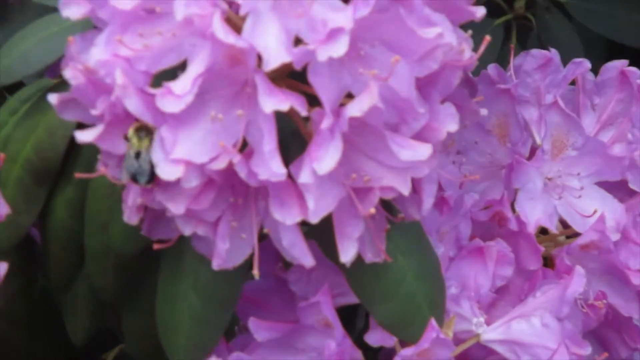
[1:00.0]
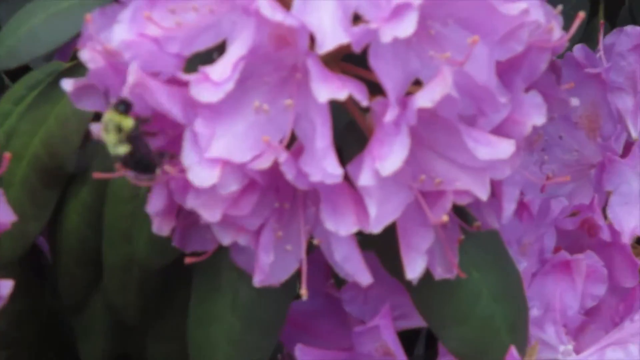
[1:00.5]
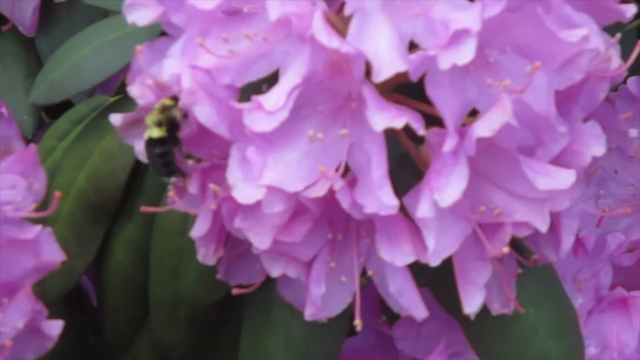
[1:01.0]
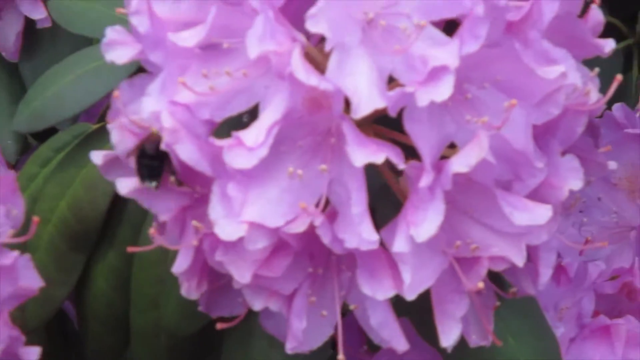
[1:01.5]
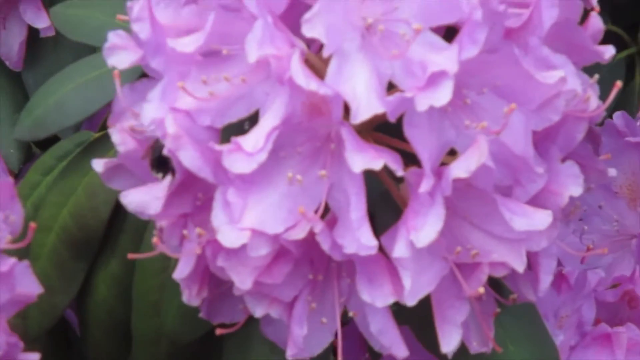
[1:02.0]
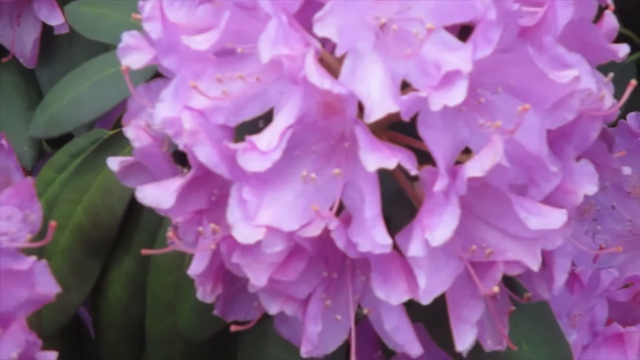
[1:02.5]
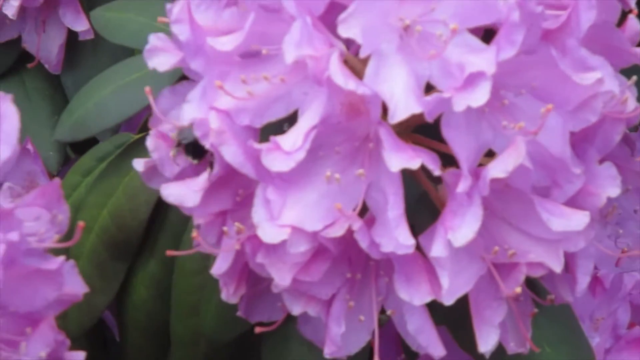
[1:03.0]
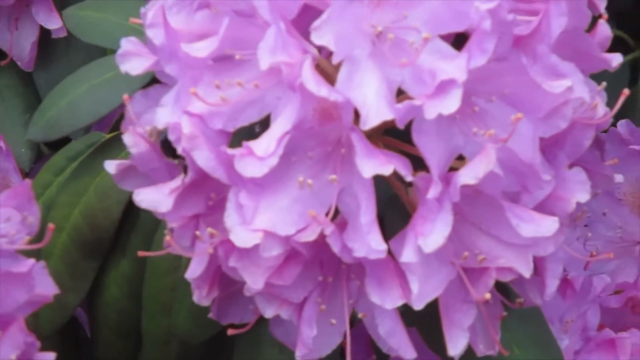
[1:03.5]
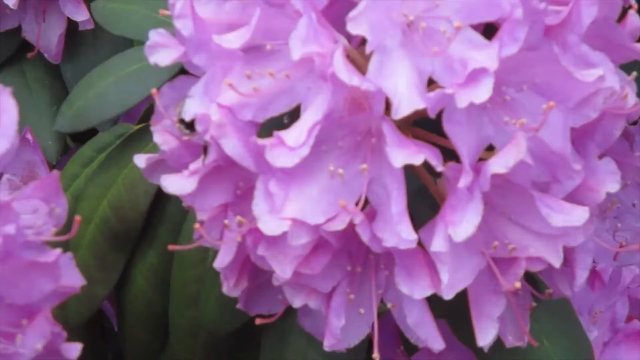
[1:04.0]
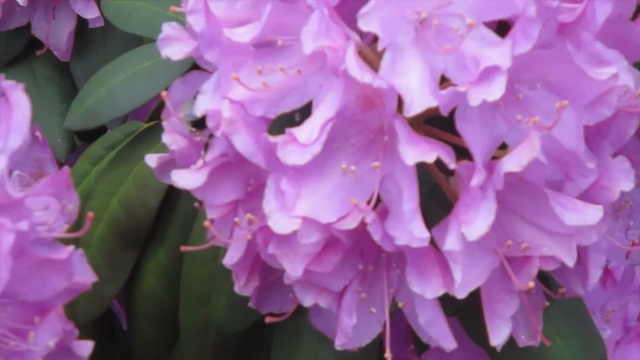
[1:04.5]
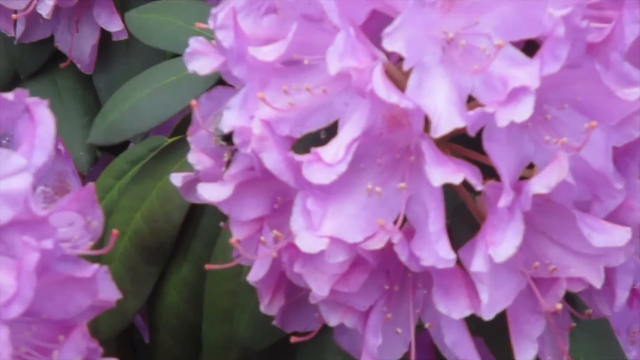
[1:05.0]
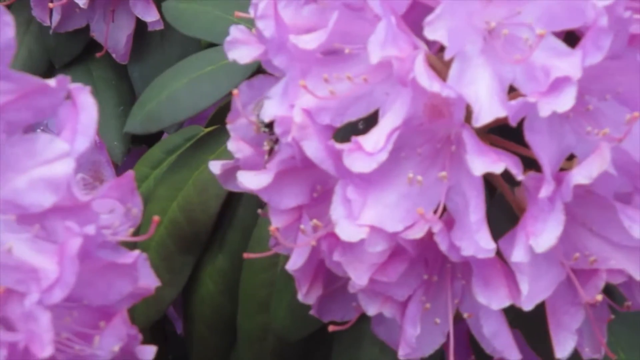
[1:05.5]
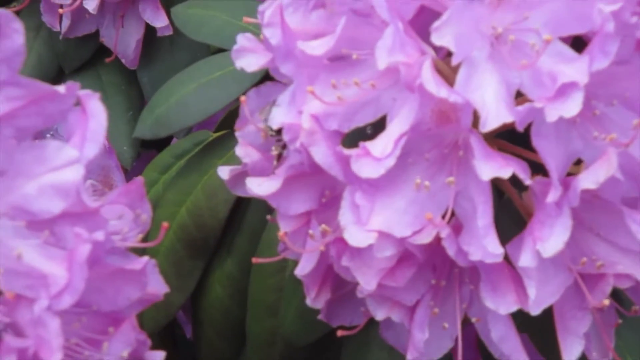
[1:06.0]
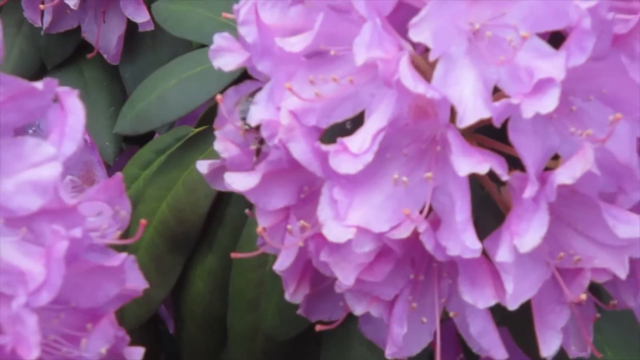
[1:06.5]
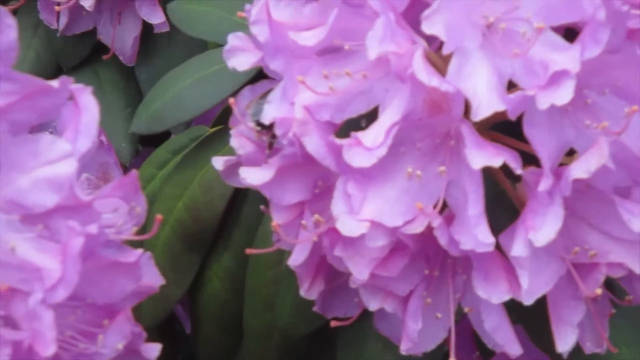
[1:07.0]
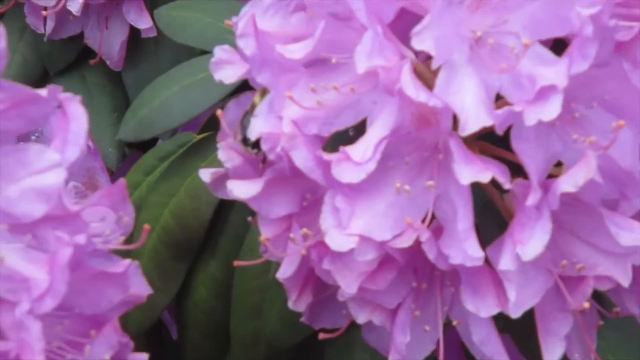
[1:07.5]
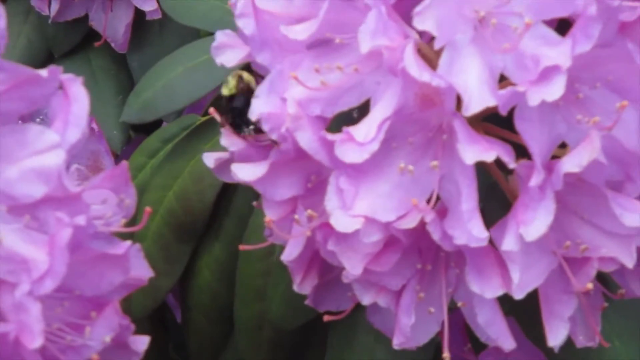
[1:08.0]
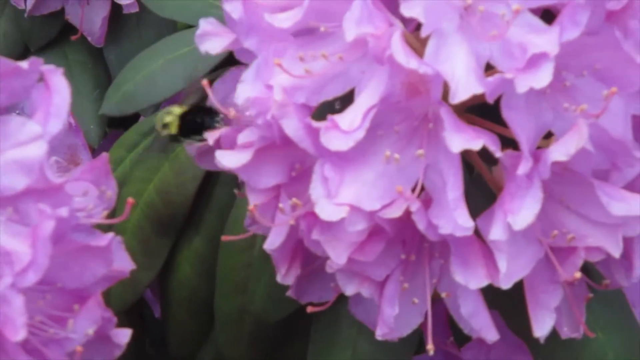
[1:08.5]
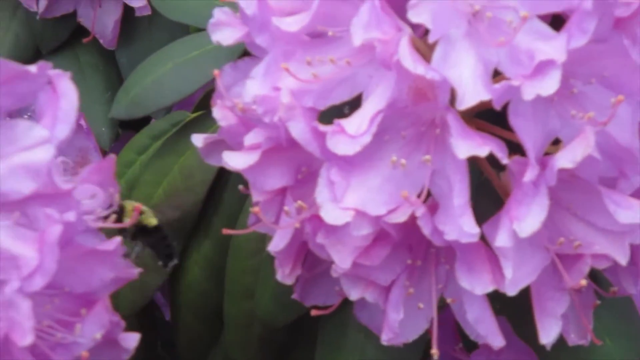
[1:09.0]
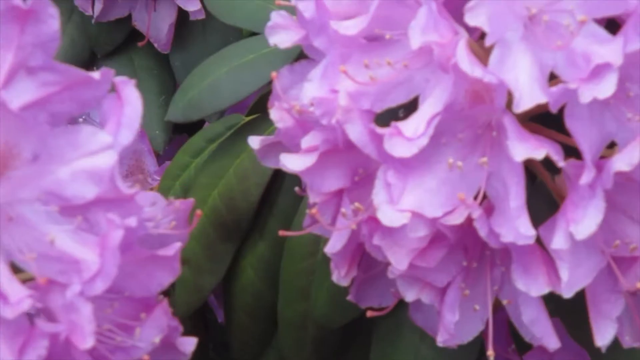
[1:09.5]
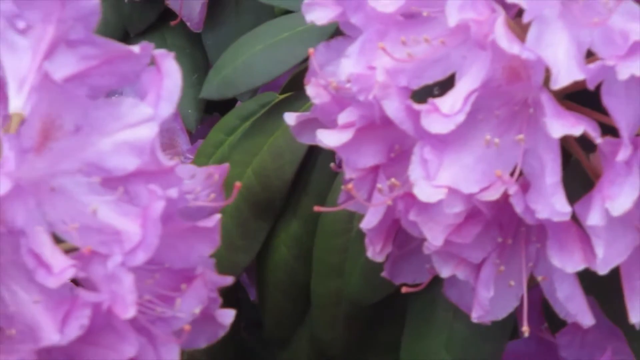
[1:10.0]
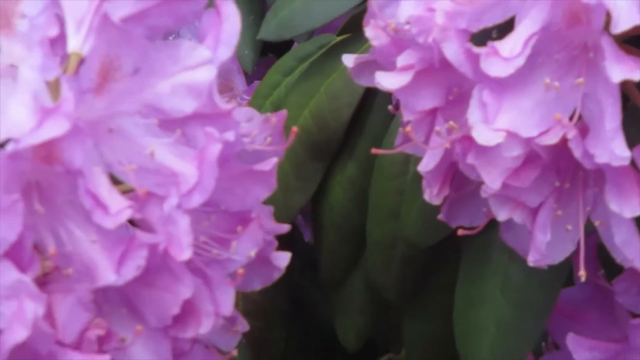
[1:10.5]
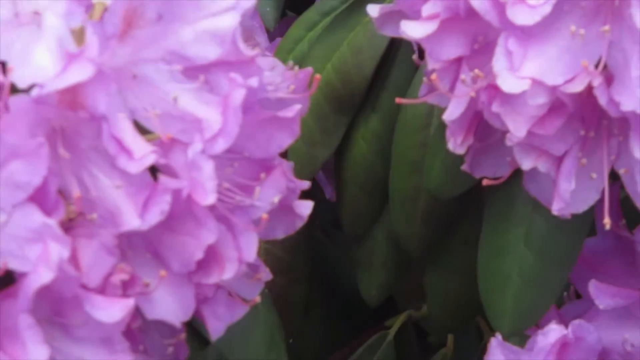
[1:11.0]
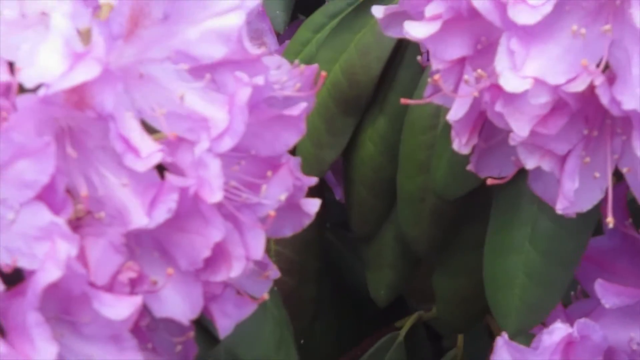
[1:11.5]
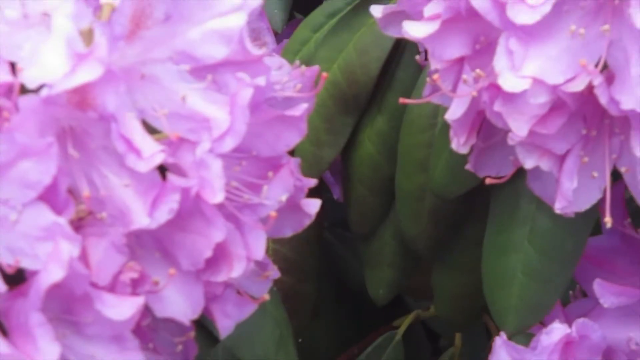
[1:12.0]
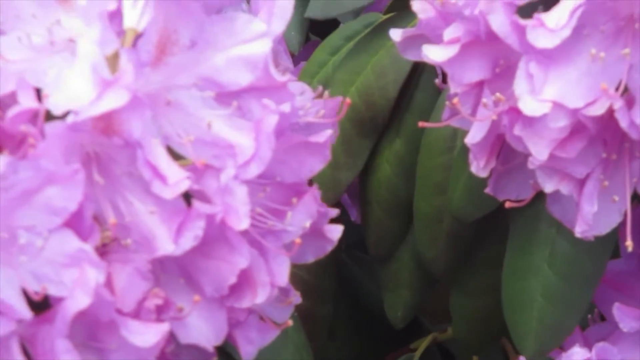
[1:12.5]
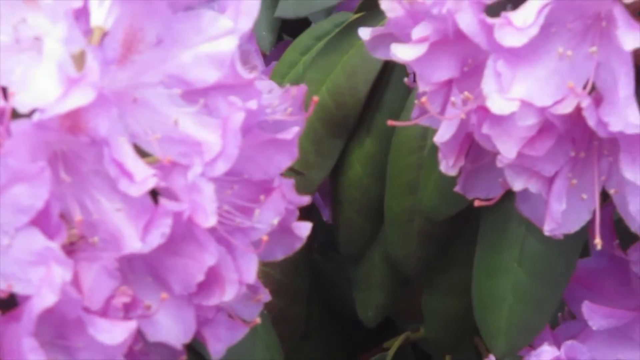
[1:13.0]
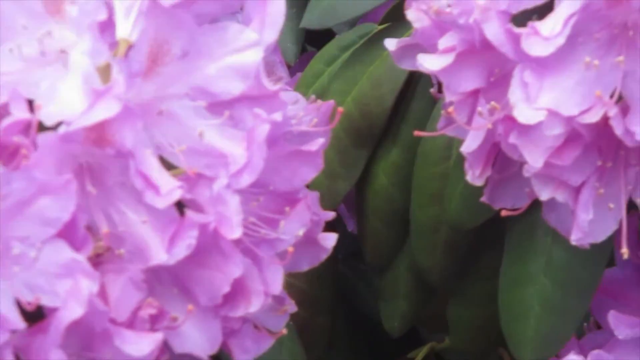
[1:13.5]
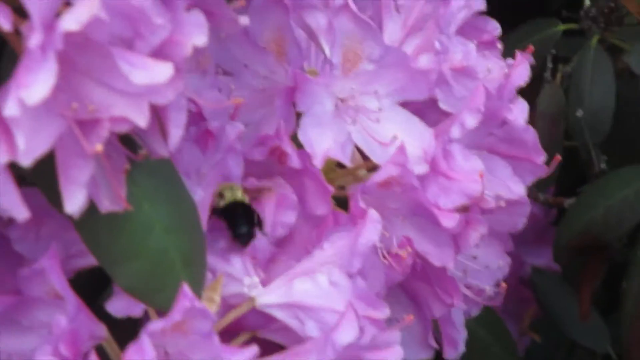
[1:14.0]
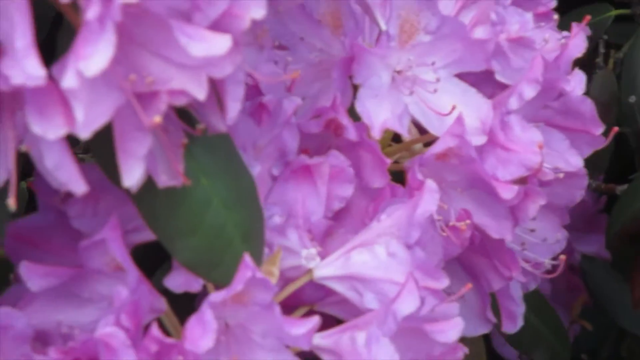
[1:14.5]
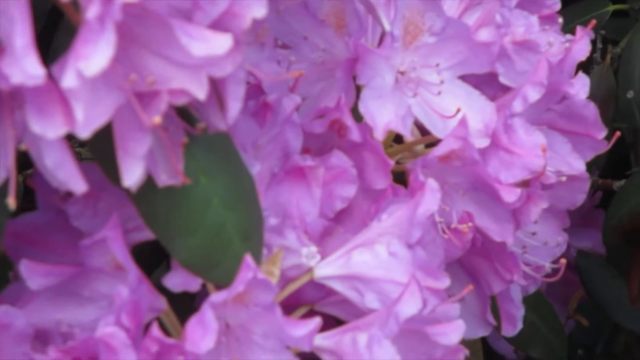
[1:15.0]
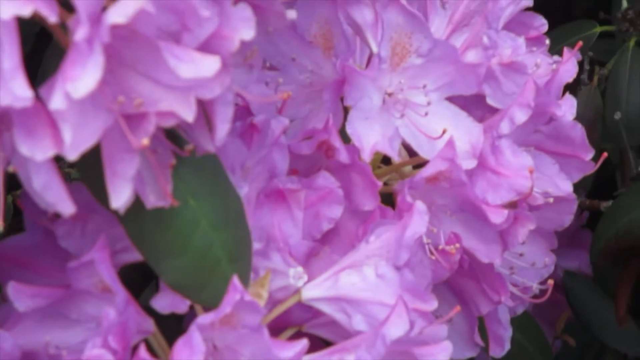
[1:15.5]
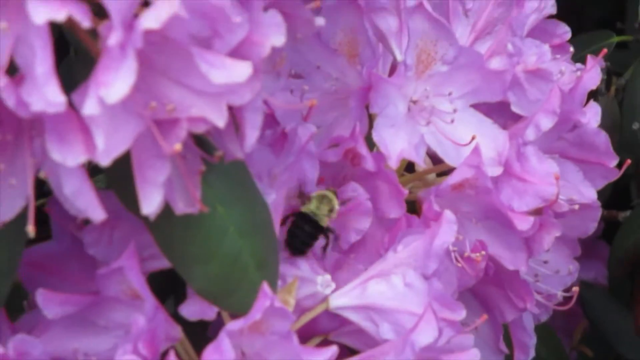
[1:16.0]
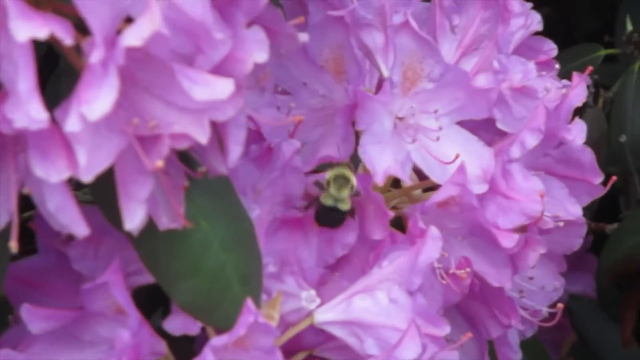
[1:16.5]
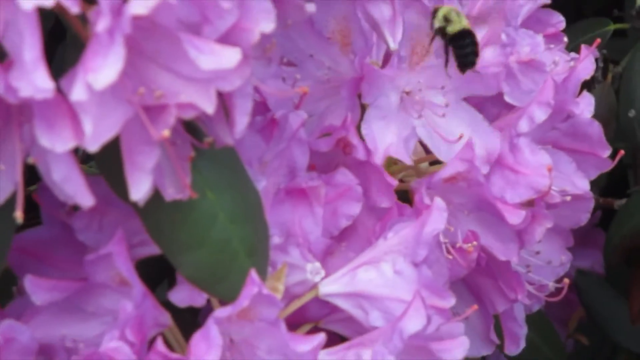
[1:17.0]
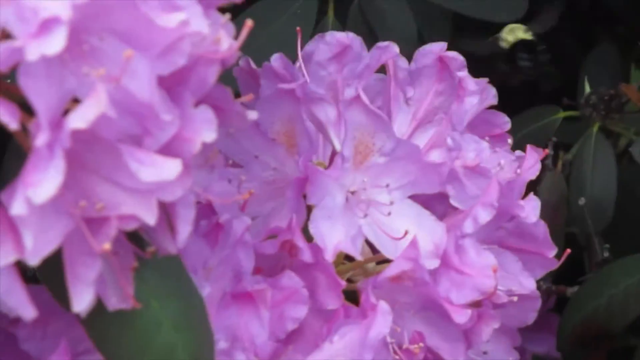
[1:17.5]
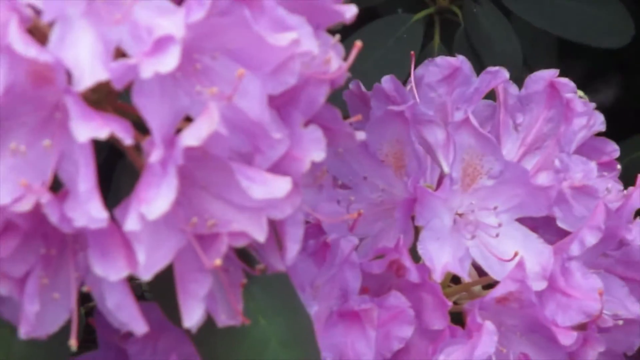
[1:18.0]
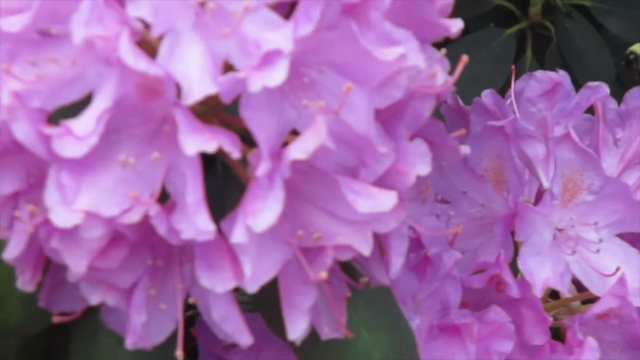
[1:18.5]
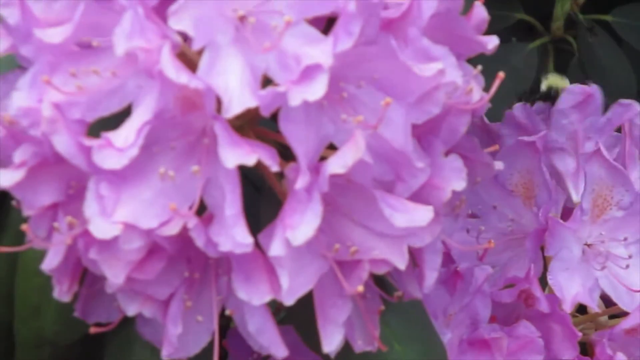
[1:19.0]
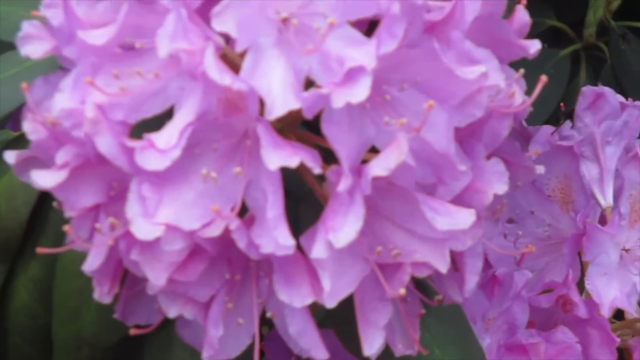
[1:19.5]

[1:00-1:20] The shot begins with at least two clusters of rhododendrons large in the frame, with green leaves just beyond them near the bottom of the frame. The camera zooms in even farther on a yellow and black bee crawling along the side of the flowers, rapidly moving its arms and trying to crawl into the center of each flower to collect the pollen. As the camera shakes slightly to the left, more green leaves appear in the background. The bee flies from one cluster of flowers to the next, directly to the left, lands, and crawls around more of them as the camera follows. It goes out of frame and emerges back into frame, flying around a little and inspecting each of the flowers. It goes behind one of the groups of flowers, emerges flying just above them, and lands on a flower again.